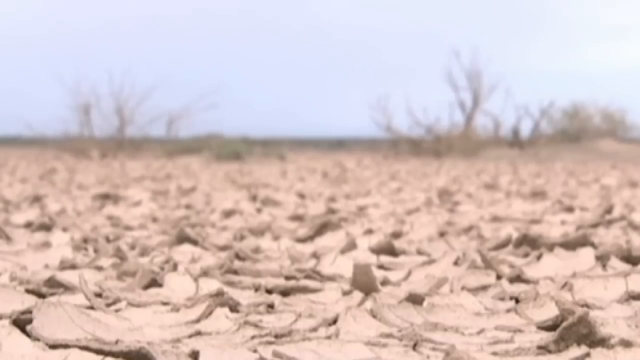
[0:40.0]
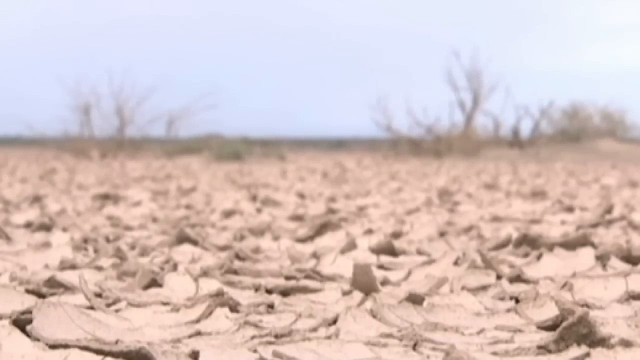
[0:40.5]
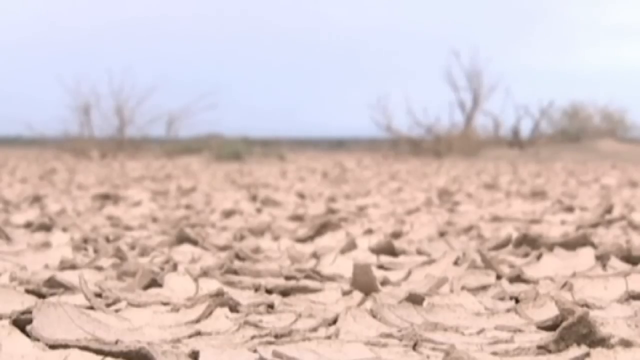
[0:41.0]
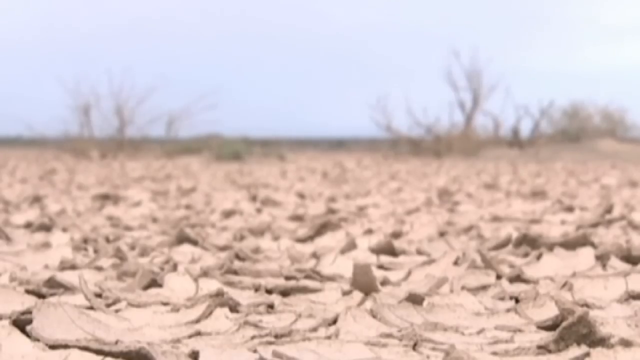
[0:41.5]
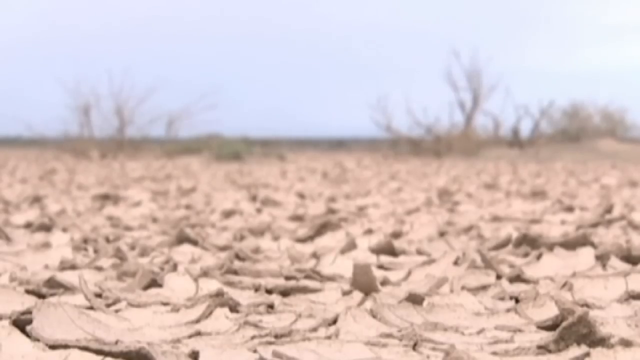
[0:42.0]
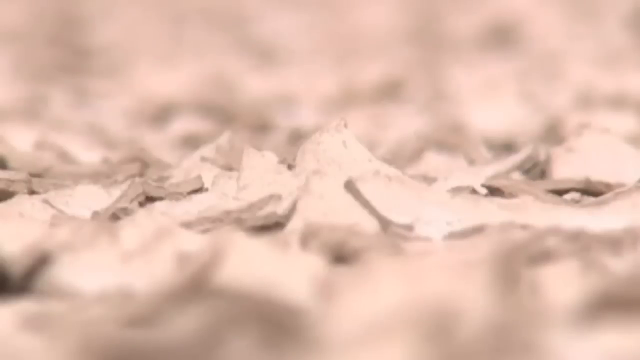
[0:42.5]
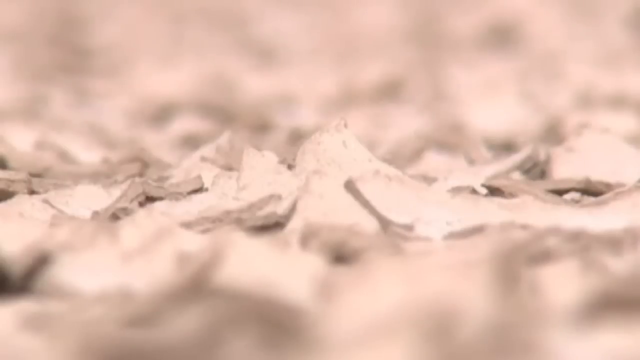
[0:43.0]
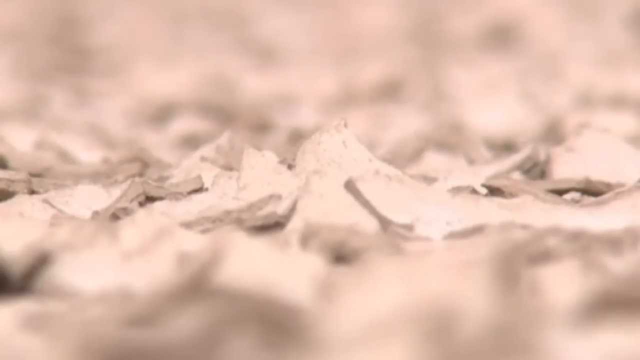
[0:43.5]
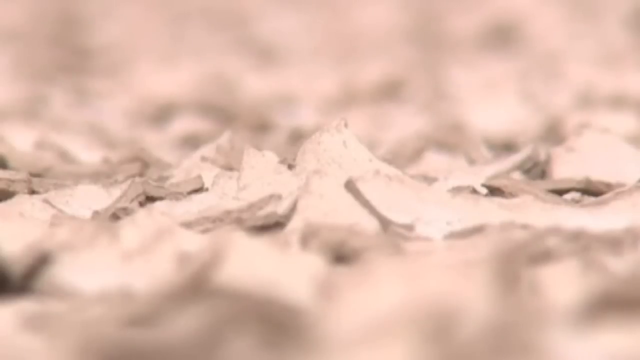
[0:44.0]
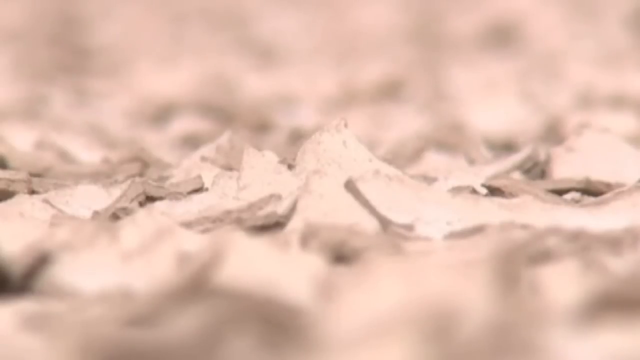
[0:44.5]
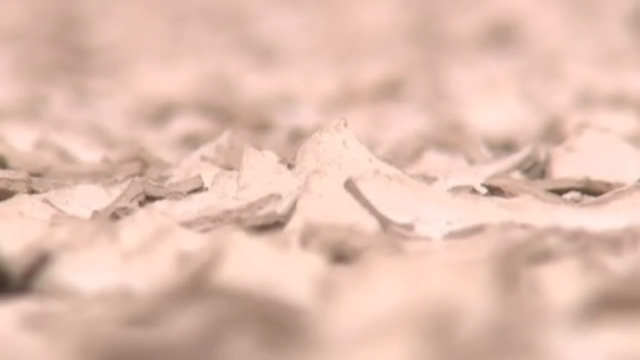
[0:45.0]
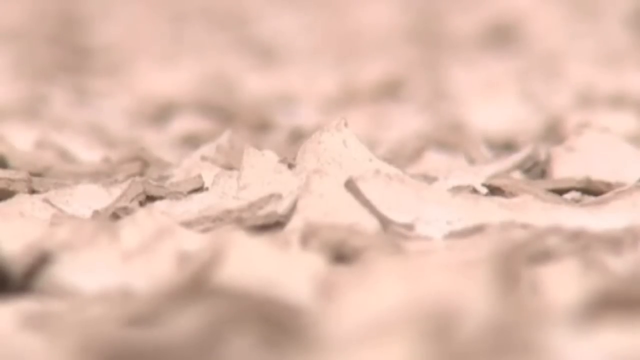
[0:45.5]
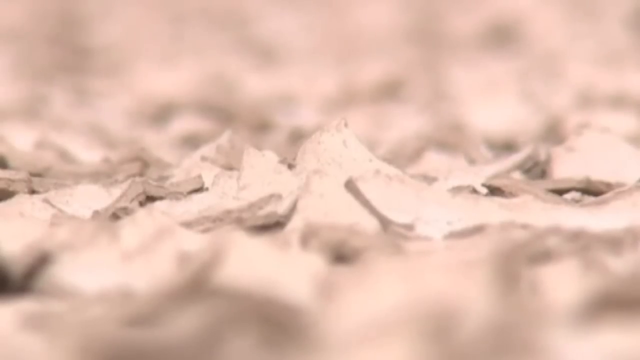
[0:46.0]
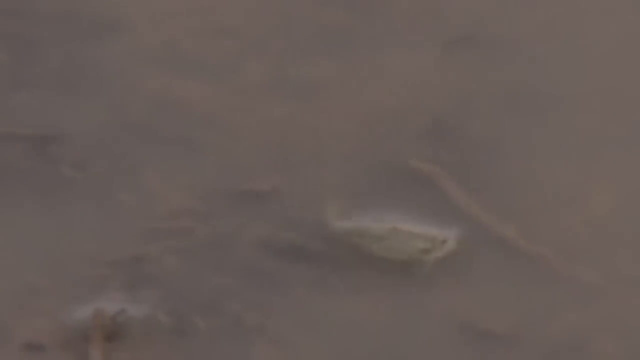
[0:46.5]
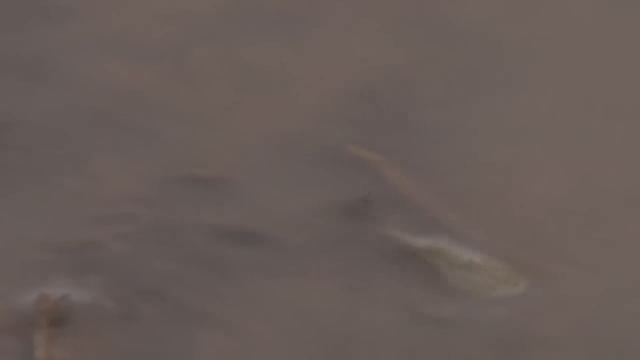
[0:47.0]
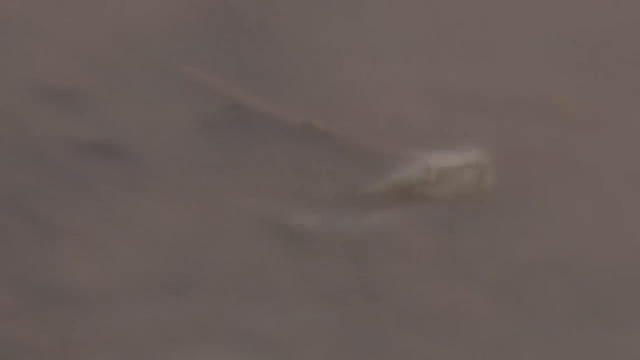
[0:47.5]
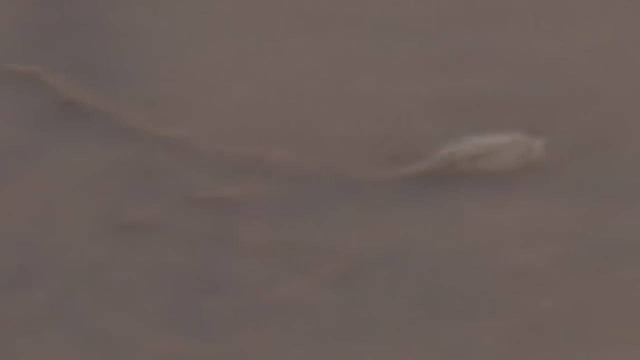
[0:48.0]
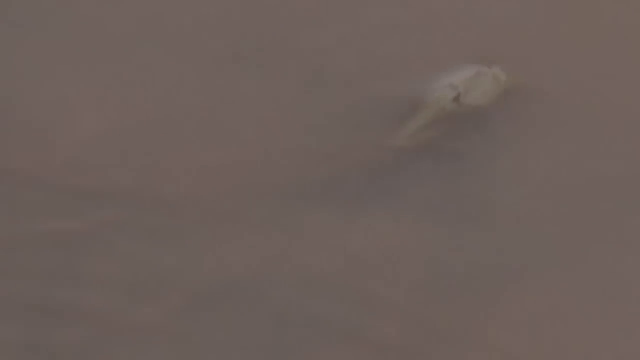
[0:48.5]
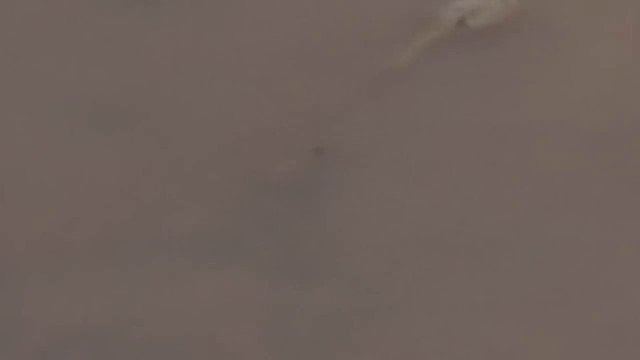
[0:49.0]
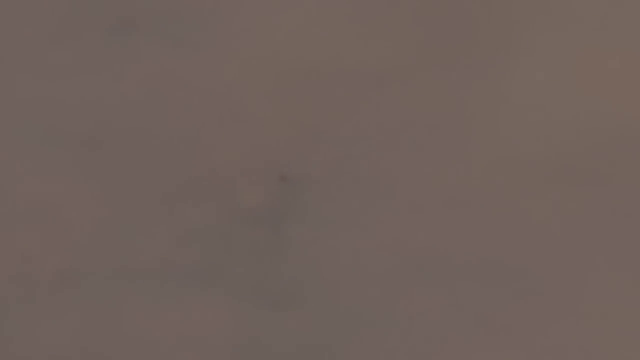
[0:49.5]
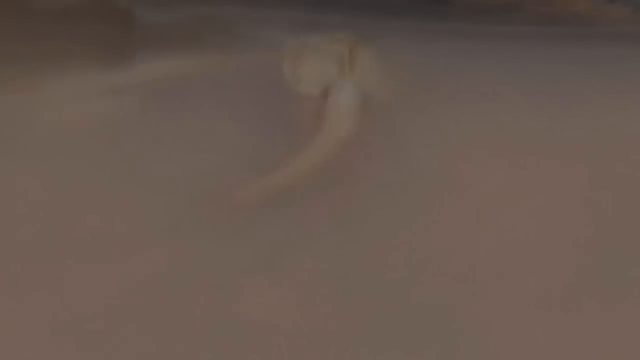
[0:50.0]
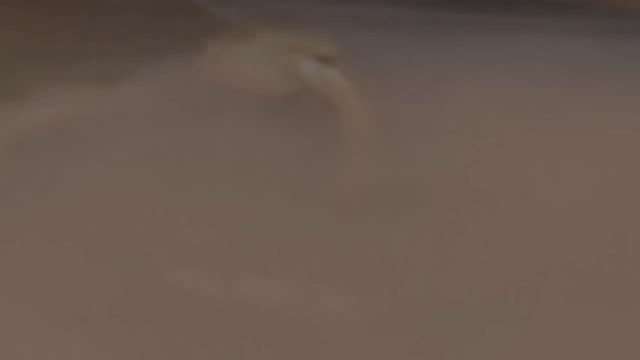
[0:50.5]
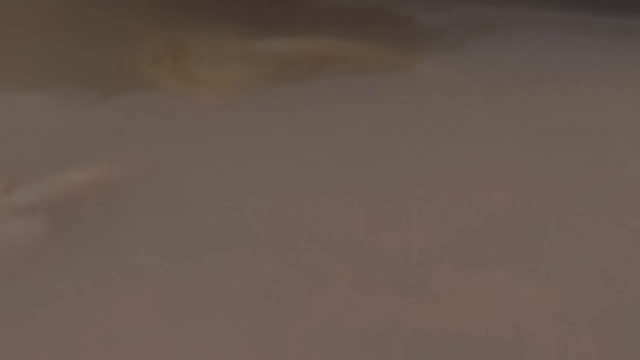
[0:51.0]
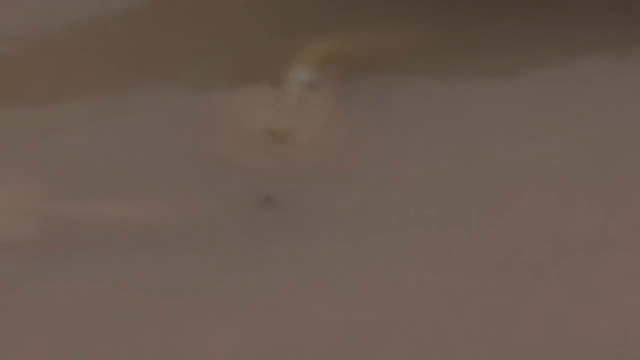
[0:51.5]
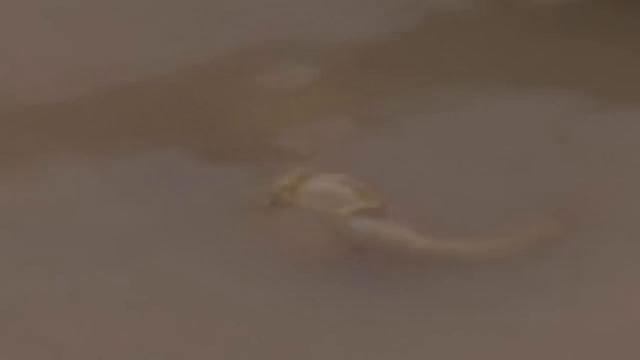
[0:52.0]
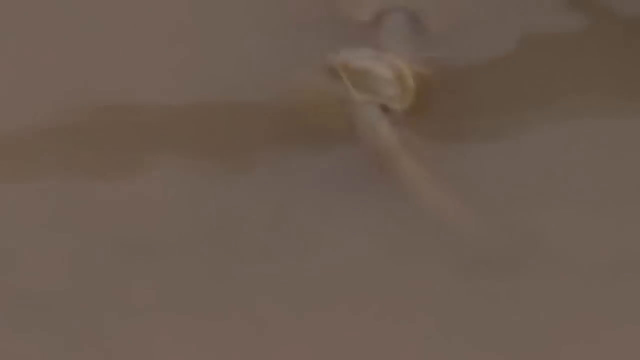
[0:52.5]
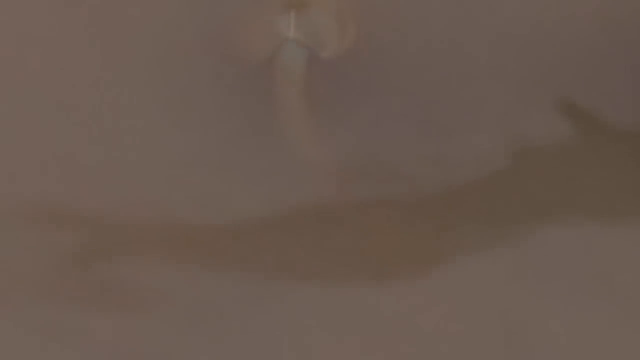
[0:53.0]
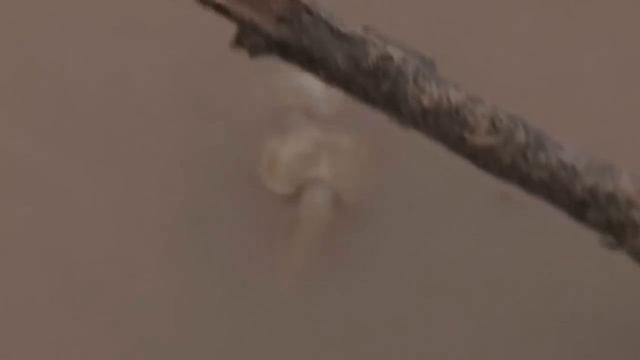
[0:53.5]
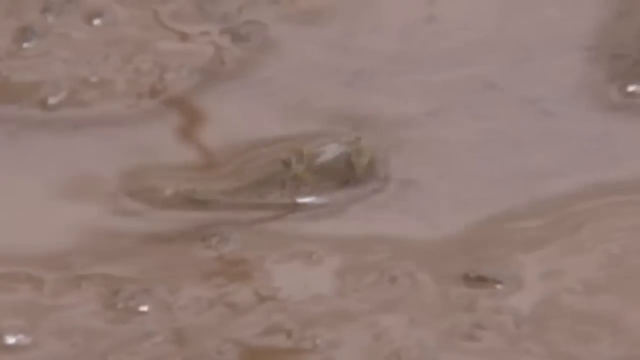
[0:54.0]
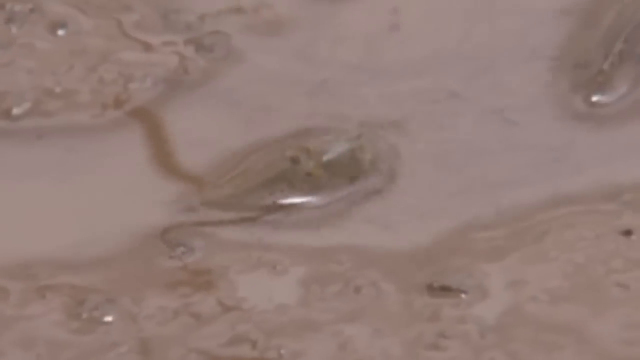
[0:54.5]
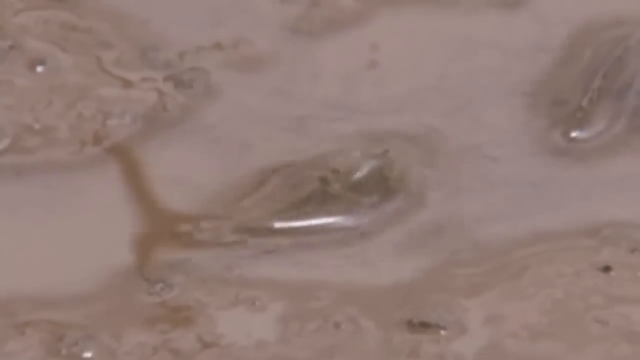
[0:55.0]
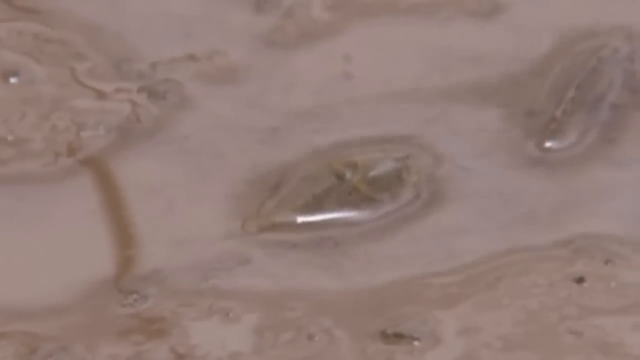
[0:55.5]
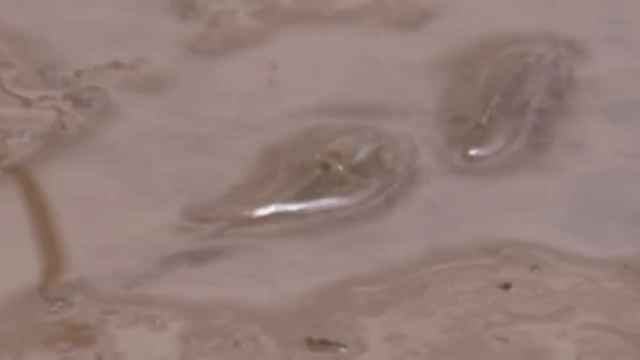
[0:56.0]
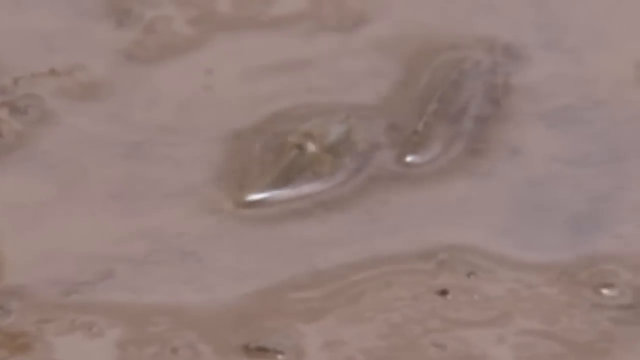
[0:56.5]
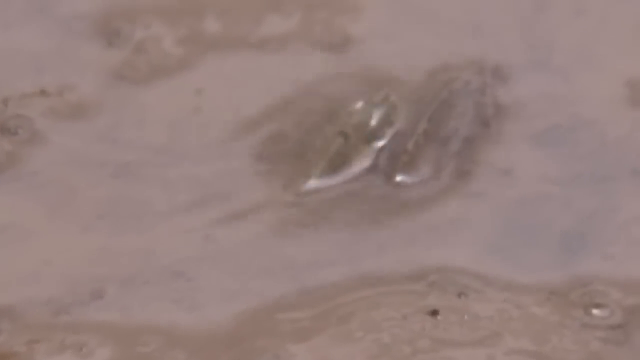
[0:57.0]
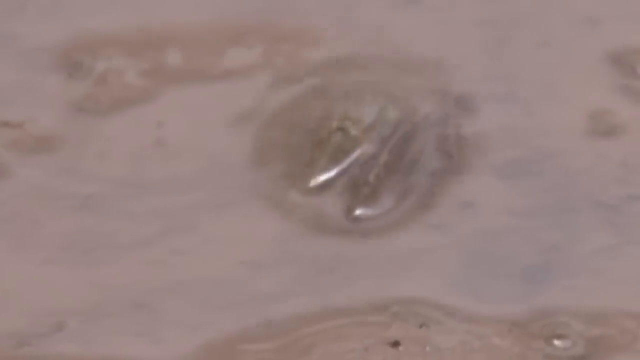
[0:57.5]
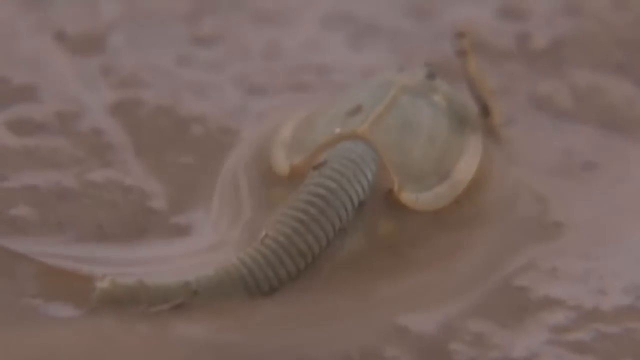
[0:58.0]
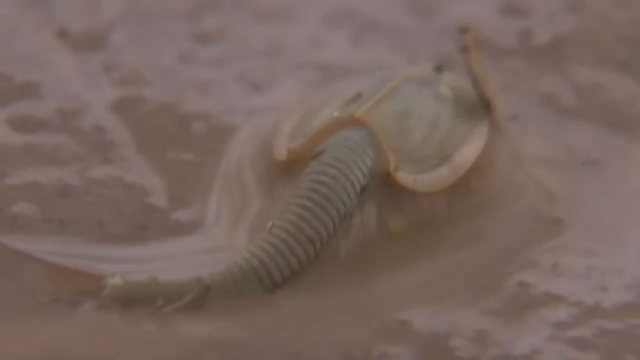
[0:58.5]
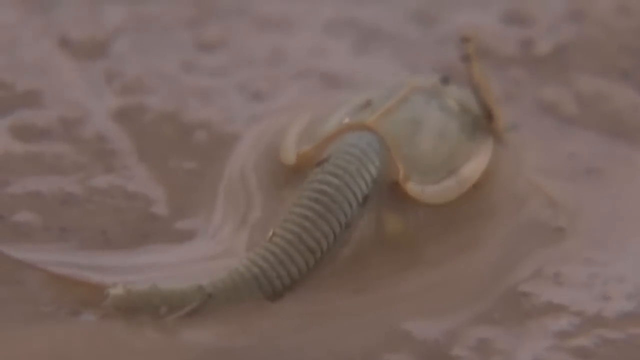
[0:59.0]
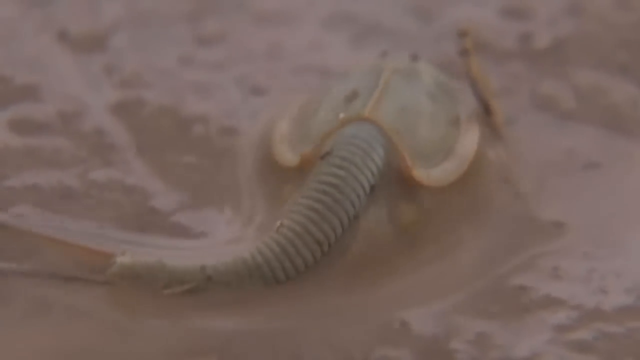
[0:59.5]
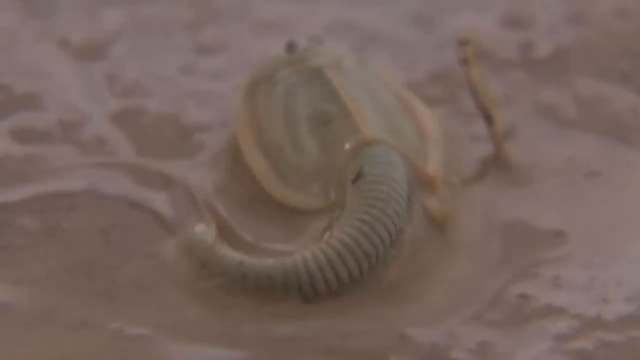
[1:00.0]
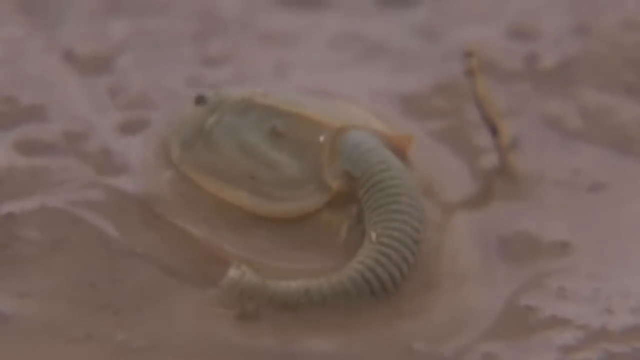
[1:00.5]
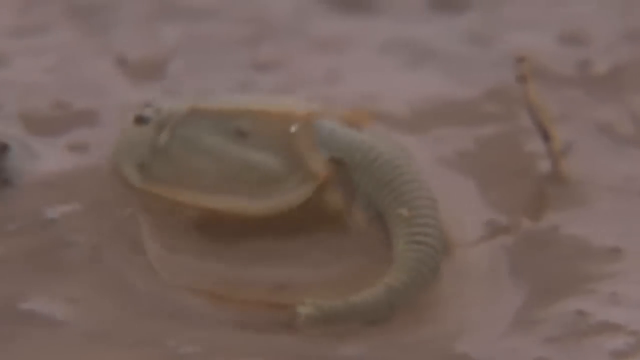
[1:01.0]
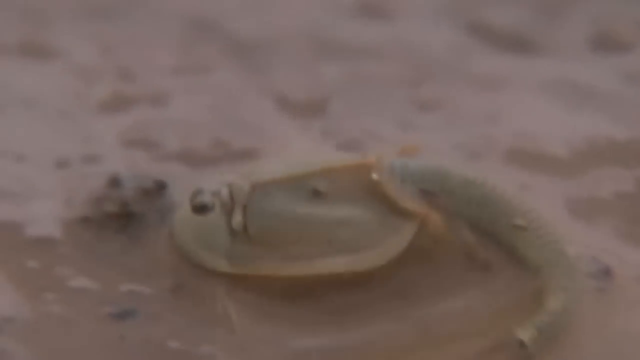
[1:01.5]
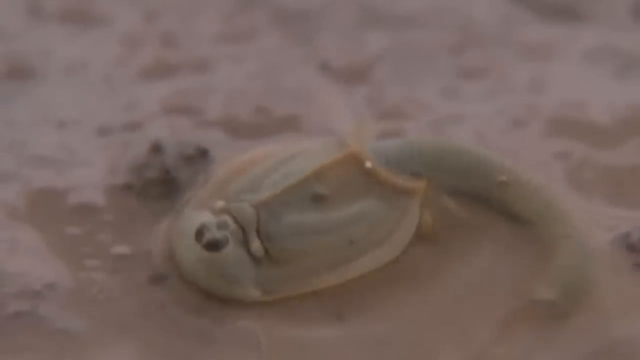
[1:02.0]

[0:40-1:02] A dry area of land and dirt appears sun-baked, crusty and broken up. The view then moves to a very shallow area of very muddy water, where what looks to be a large tadpole swims around. It resembles a sperm cell under a microscope, but much bigger. Its size is hard to determine, but it is definitely as big as half of a human hand or bigger.